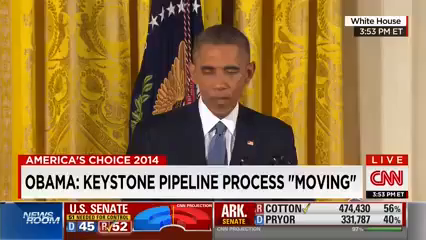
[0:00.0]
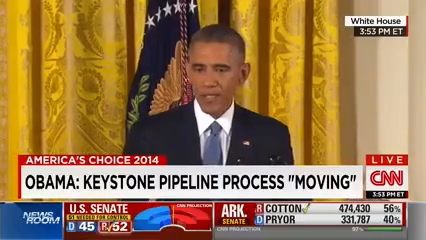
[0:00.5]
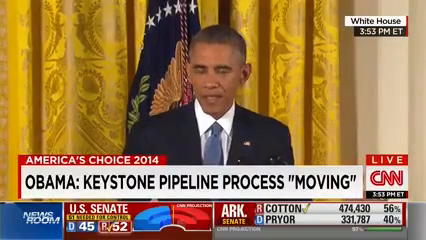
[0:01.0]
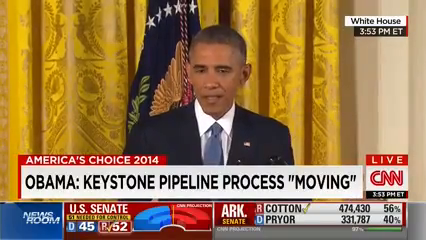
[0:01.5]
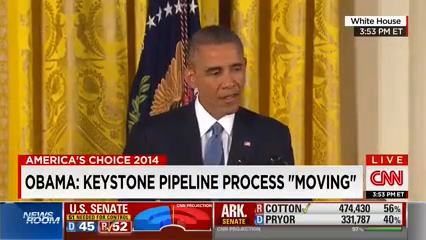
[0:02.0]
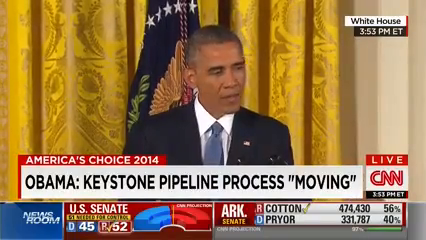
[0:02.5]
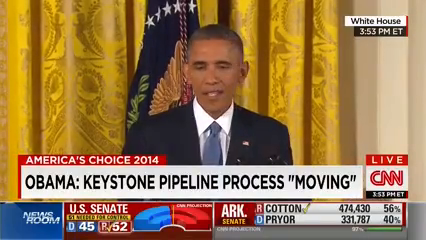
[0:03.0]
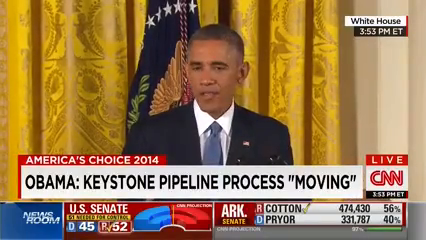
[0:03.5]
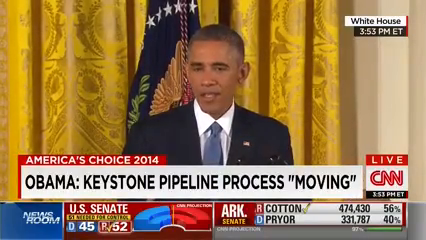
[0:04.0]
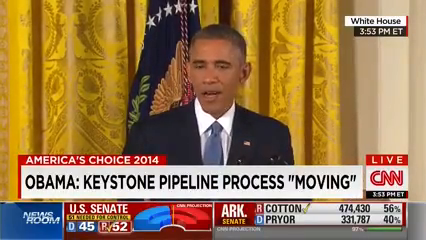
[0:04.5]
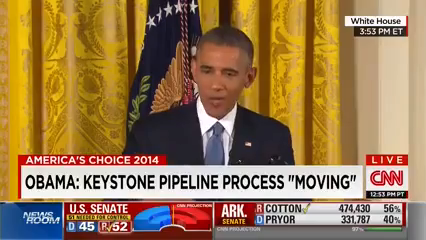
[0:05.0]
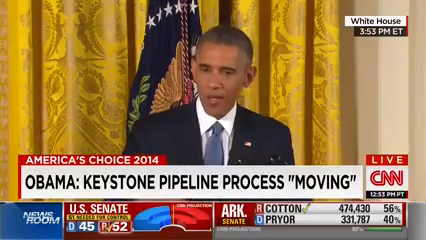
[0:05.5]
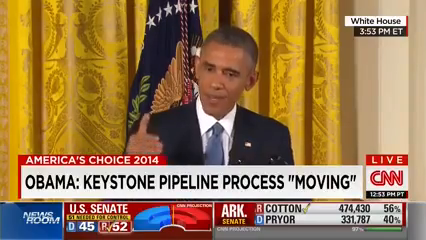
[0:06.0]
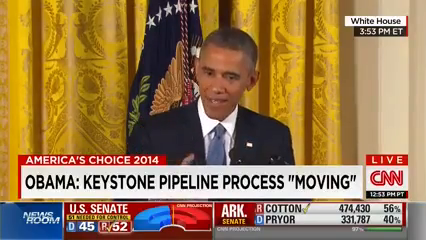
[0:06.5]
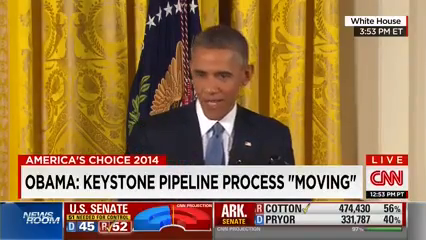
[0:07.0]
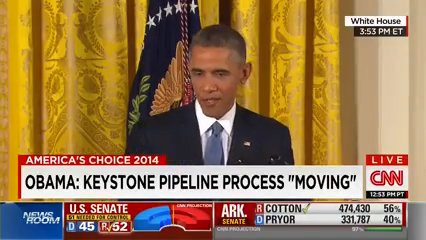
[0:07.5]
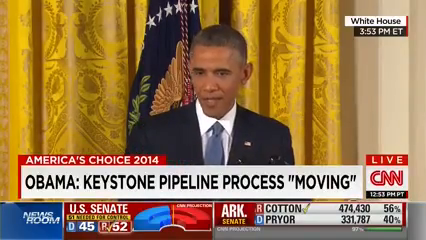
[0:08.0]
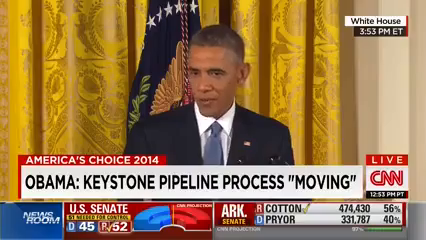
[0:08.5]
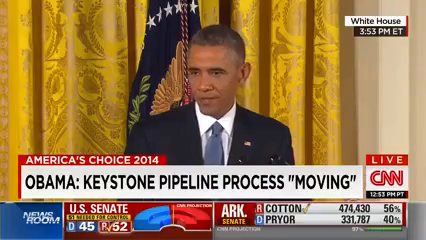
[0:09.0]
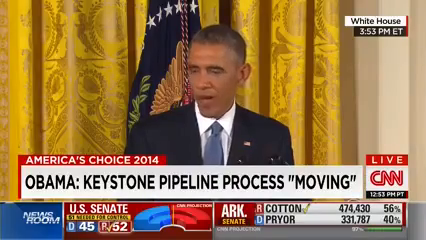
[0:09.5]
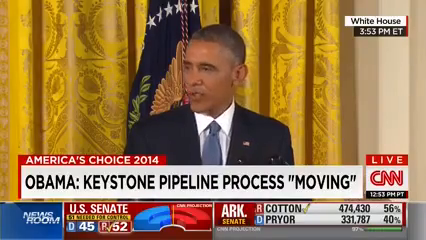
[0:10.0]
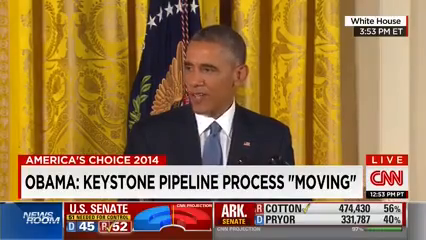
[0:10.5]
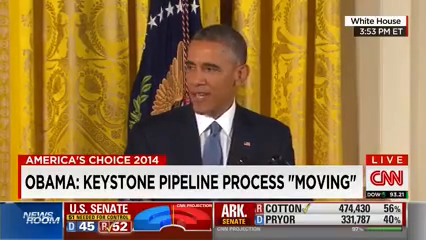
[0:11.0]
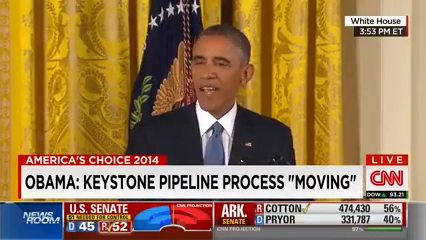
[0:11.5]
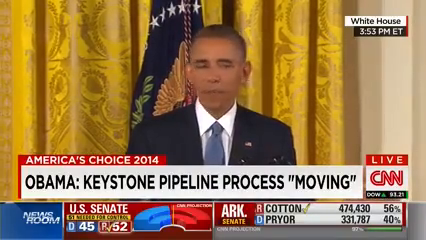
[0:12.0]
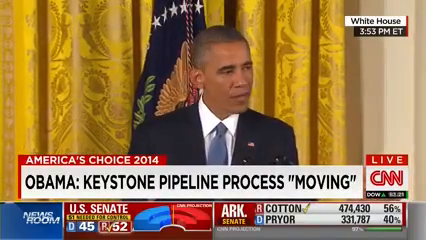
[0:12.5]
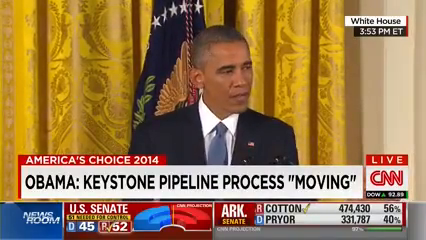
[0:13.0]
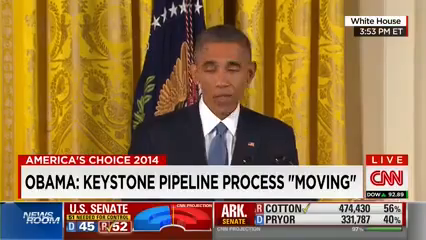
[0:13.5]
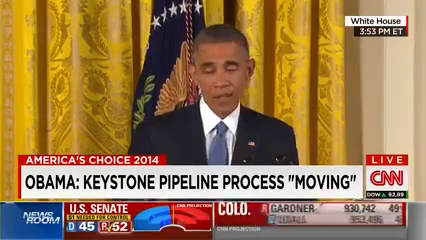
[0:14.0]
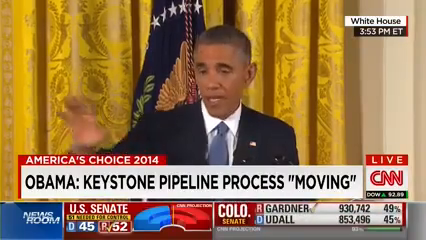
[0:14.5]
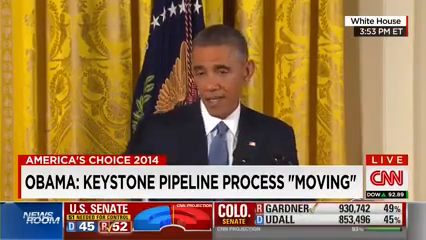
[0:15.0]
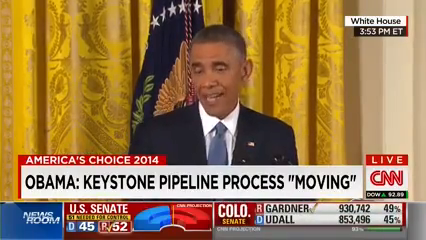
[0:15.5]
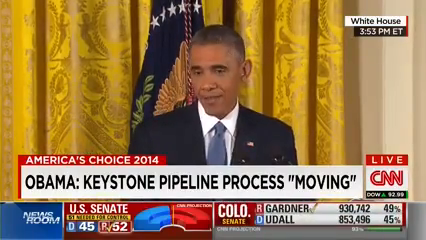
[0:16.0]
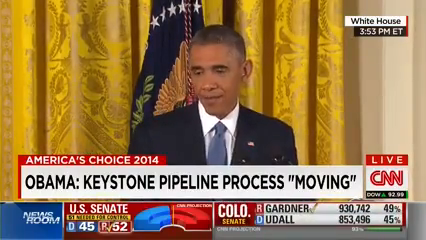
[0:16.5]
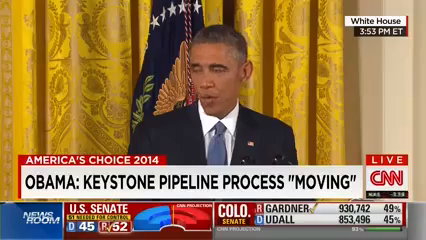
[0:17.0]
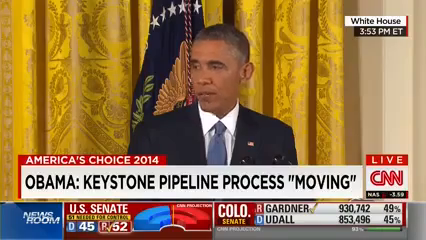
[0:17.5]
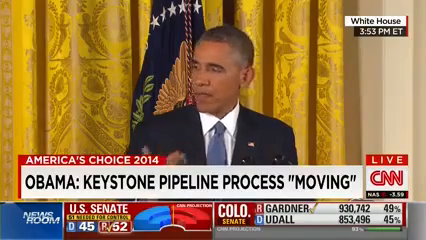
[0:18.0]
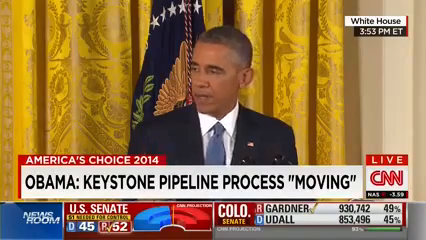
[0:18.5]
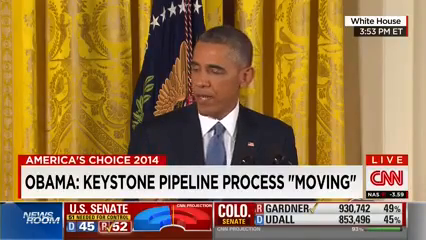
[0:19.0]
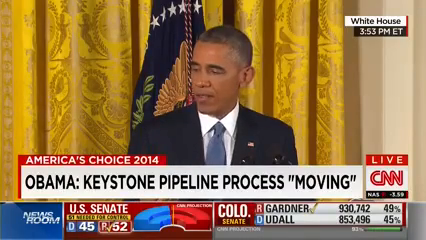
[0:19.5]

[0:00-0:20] Former President Obama stands at a podium, speaking into a microphone, and seems to be addressing an audience. Behind him is a golden and yellow curtain along with a flag of uncertain origin, partially covered by his body. He speaks slightly animatedly, making a few hand gestures but not many. He wears a navy suit and a light blue tie, with a presidential pin on his upper left shoulder. Banners run along the bottom of the screen. In the bottom right, "Live" appears with the CNN symbol in white and red. The time is shown in both EST and Pacific time, and the top right reads "White House" and "3:53 p.m." The main banner, in black font on a white background, reads "Obama Keystone Pipeline Process Moving," and "America's Choice 2014" appears in white font on a red background. At the bottom, "Newsroom" is shown, along with "U.S. Senate, D45, R52" in blue and red, possibly representing Democrats and Republicans, and a horseshoe-like symbol apparently representing their proportions. More statistics appear at the bottom right.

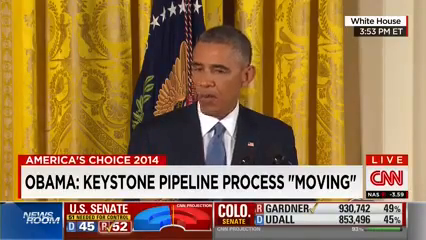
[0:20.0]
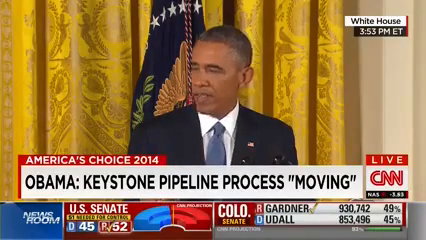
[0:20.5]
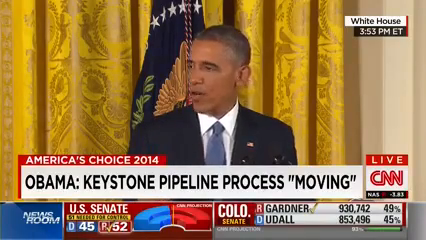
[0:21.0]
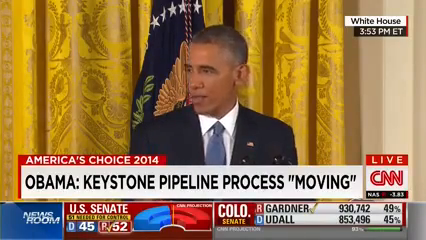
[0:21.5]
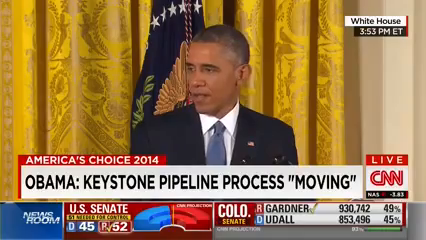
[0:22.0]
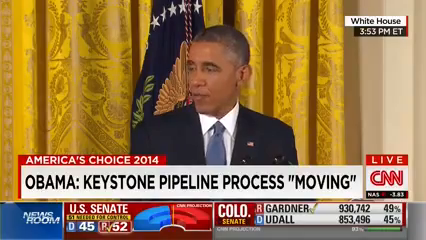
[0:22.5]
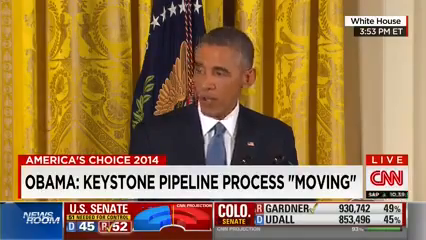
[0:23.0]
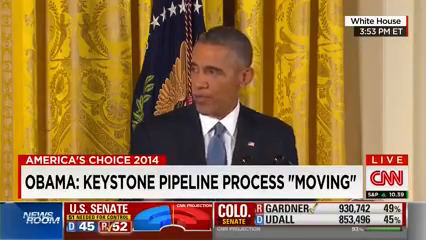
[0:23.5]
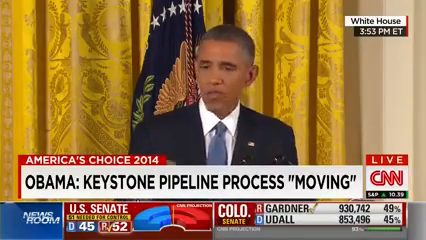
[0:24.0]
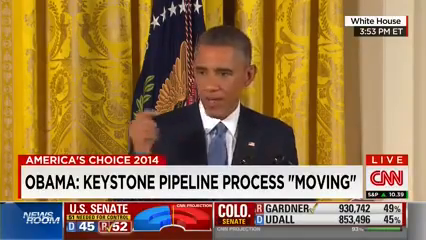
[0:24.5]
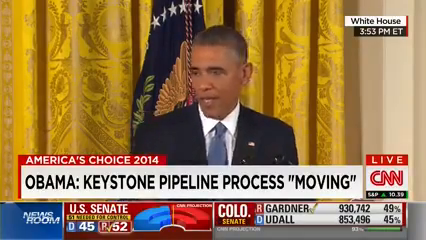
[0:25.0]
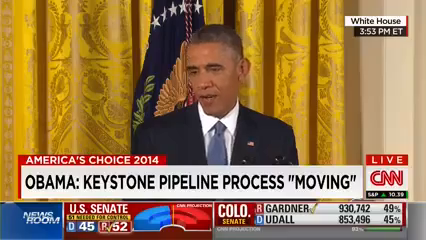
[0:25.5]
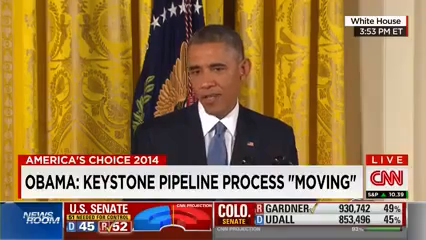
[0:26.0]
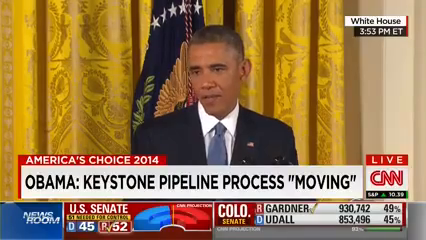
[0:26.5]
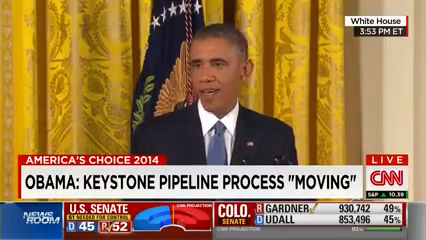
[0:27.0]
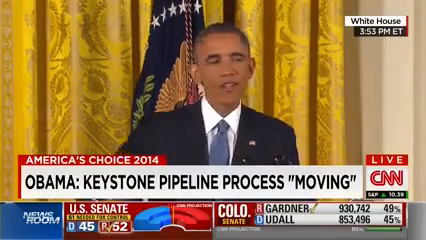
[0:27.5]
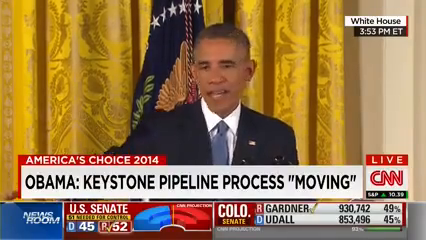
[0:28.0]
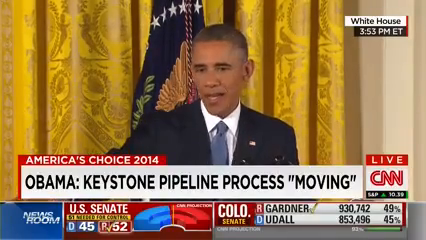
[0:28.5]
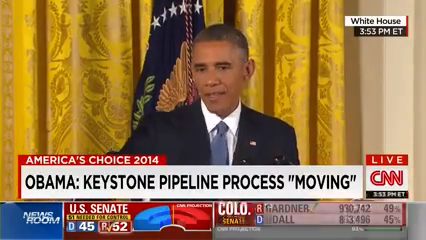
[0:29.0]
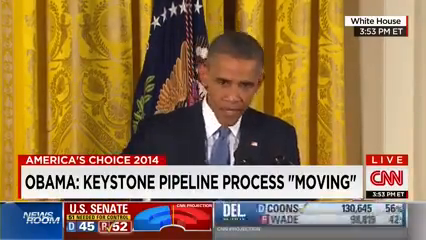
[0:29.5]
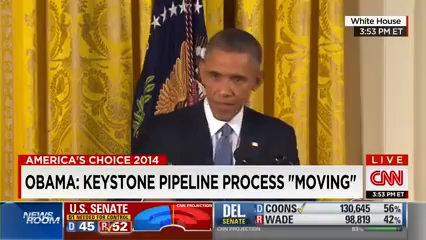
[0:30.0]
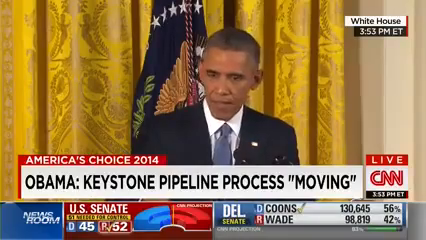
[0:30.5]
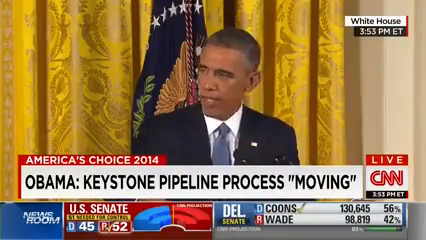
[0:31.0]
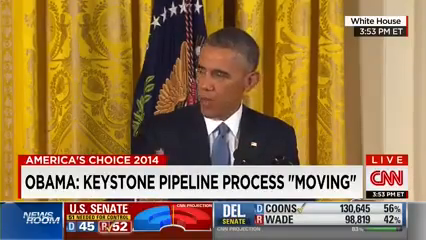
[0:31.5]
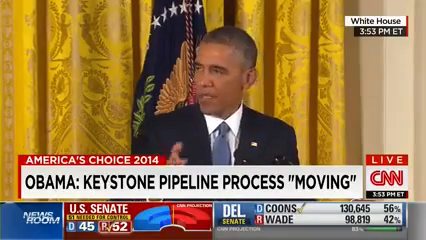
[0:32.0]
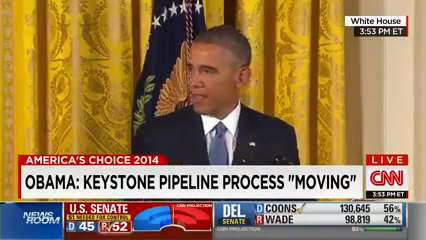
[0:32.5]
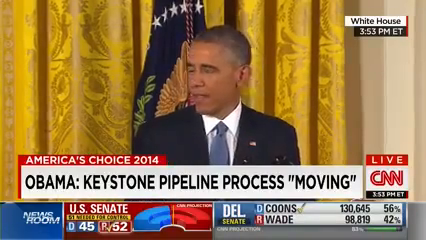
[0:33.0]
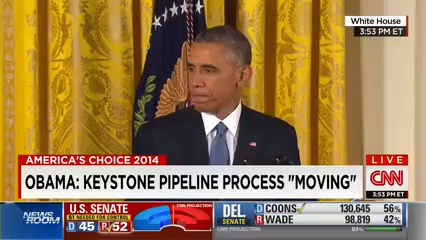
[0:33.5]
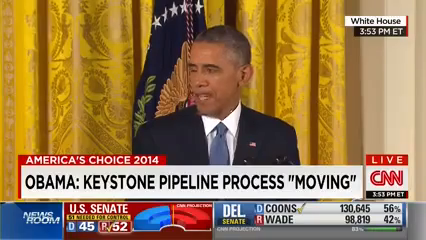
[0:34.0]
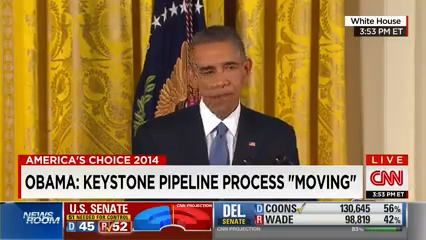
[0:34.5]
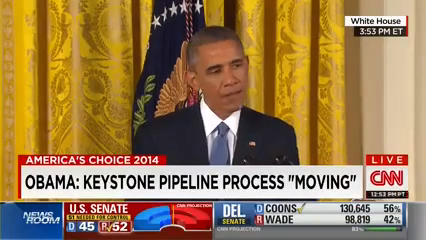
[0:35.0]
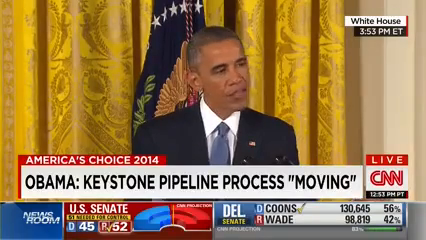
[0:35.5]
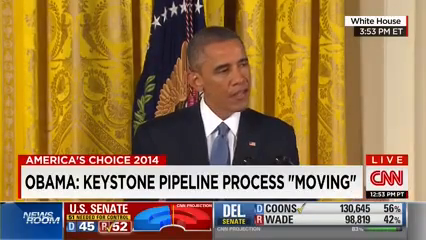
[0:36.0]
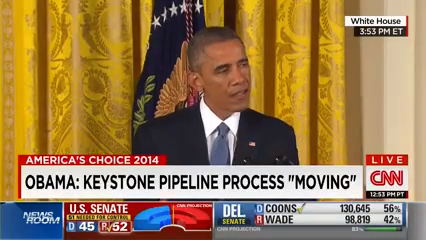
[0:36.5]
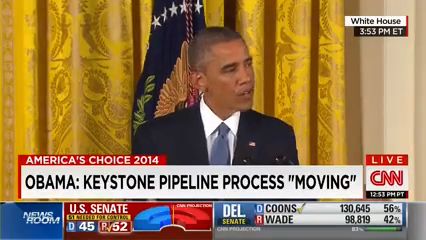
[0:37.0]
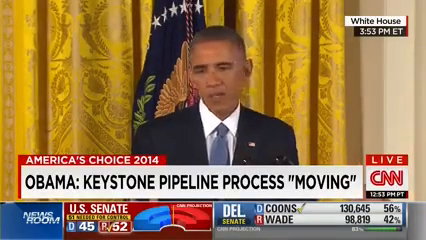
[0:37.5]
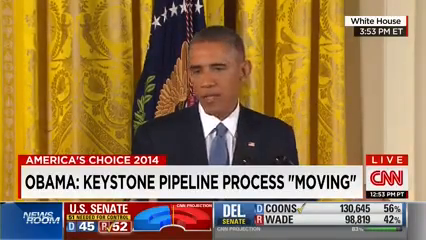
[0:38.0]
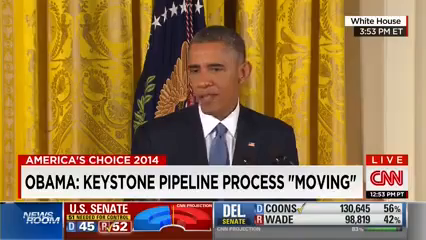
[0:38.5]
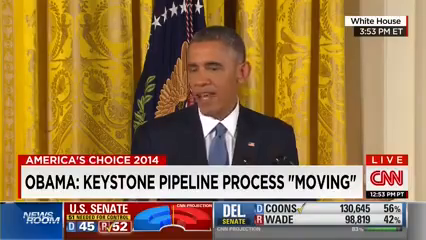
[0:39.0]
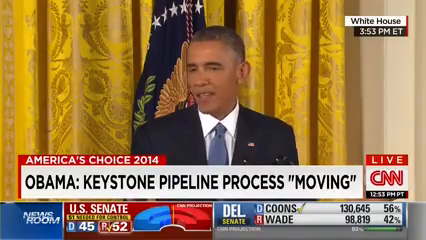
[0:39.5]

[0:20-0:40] Former President Obama continues speaking into the microphone at the podium. The microphone looks to be black, but it is hard to distinguish because his suit is a very similar color. He keeps making a few animated hand gestures, which seem to be pointing to the side or typical gestures to convey emotion. He looks around the room, turning his gaze left and right, back and forth repeatedly. He speaks the entire time, so it seems to be a speech rather than a question-and-answer session. His hair is mostly black and he has dark skin. He still wears the navy suit and light blue tie. The time on screen still reads 3:53 p.m. Toward the end he looks toward the middle, moves his head slightly down, and then turns to the left.